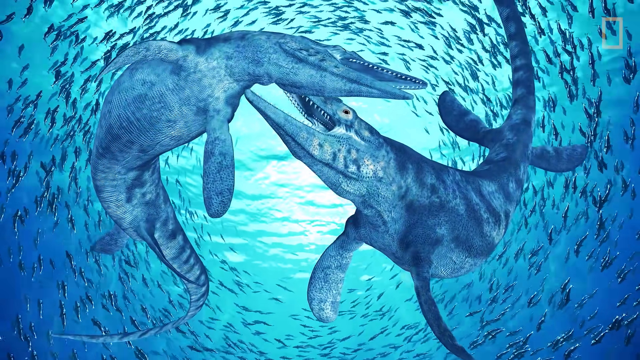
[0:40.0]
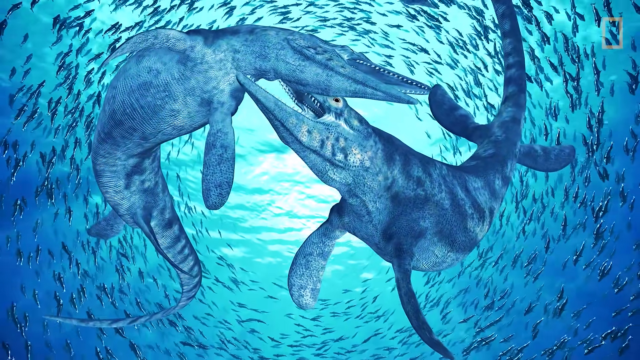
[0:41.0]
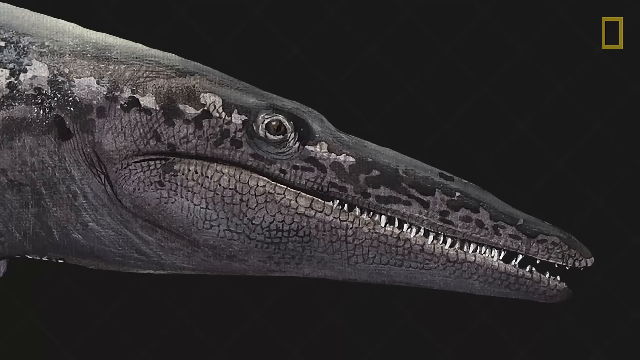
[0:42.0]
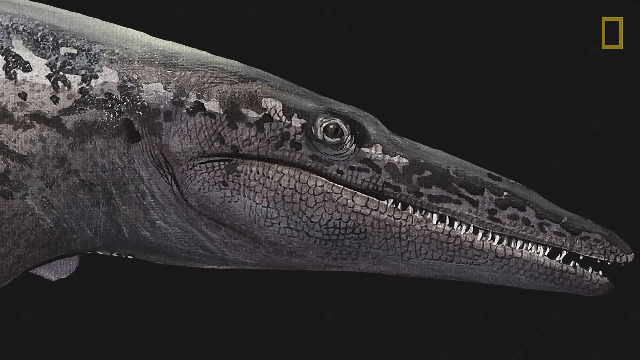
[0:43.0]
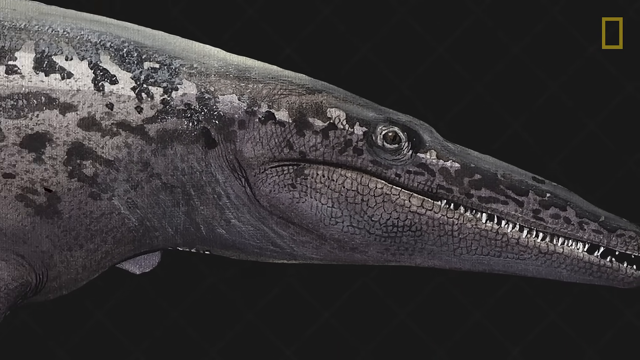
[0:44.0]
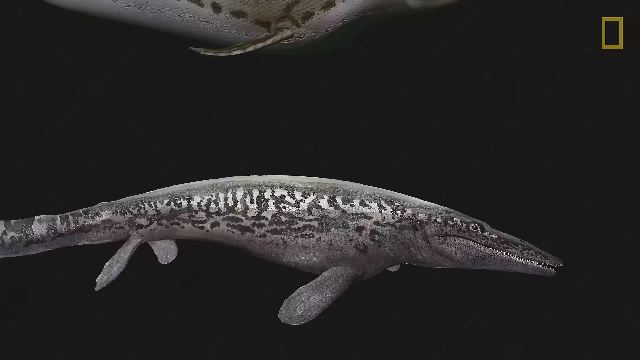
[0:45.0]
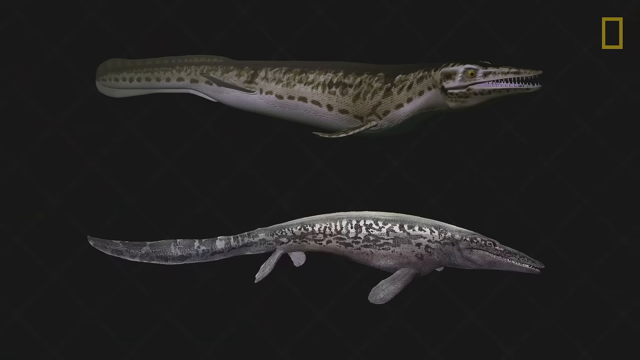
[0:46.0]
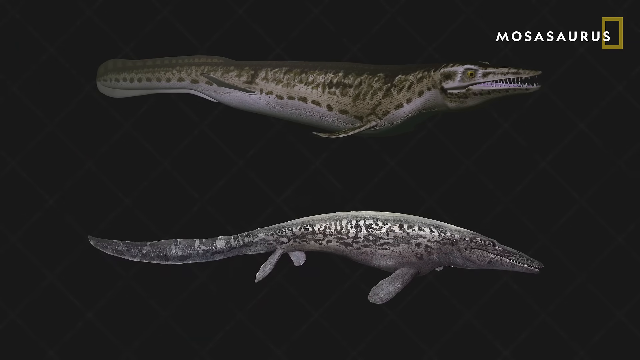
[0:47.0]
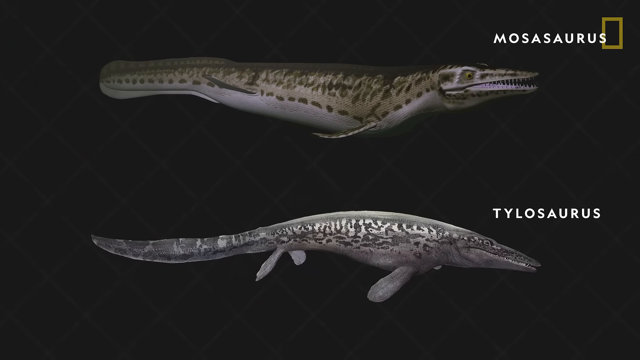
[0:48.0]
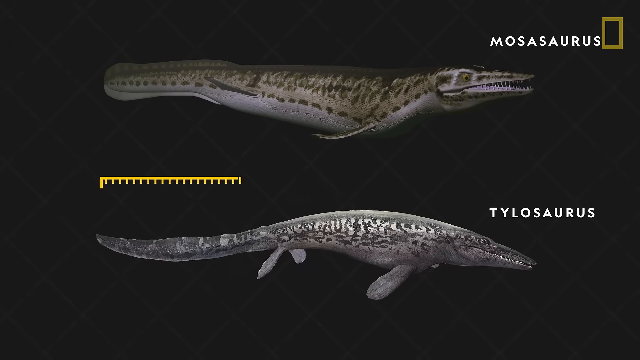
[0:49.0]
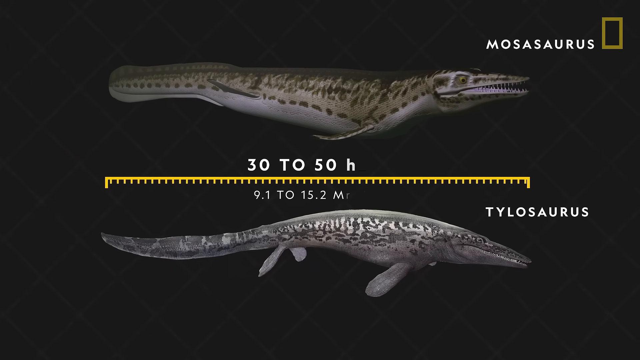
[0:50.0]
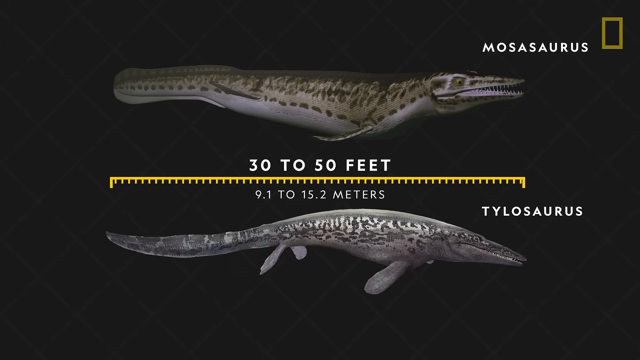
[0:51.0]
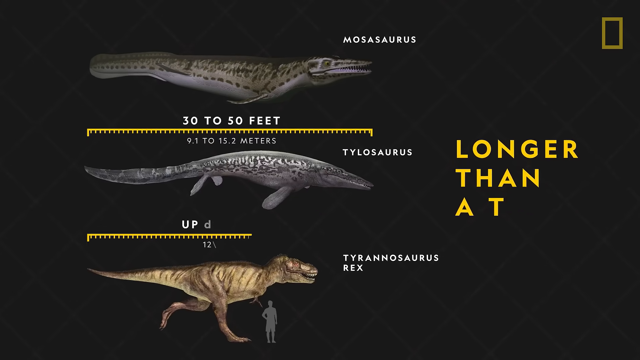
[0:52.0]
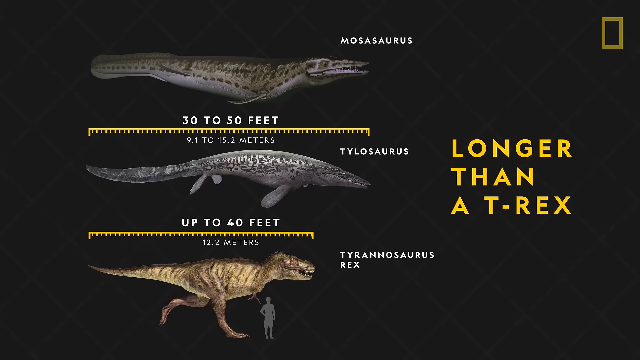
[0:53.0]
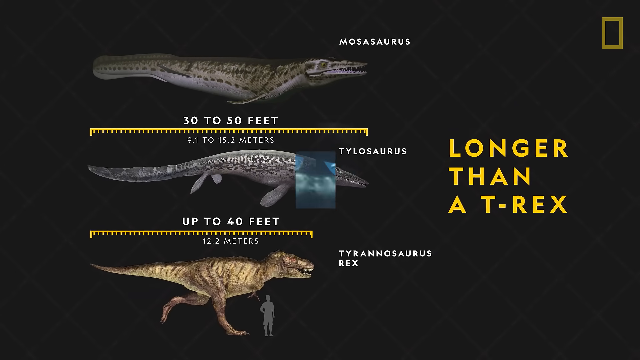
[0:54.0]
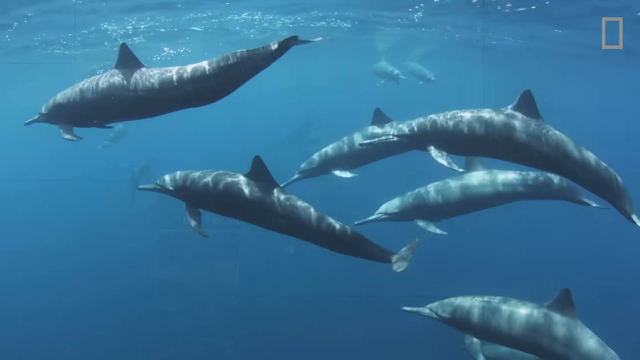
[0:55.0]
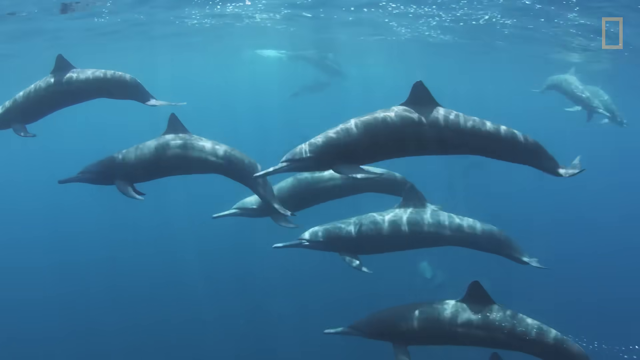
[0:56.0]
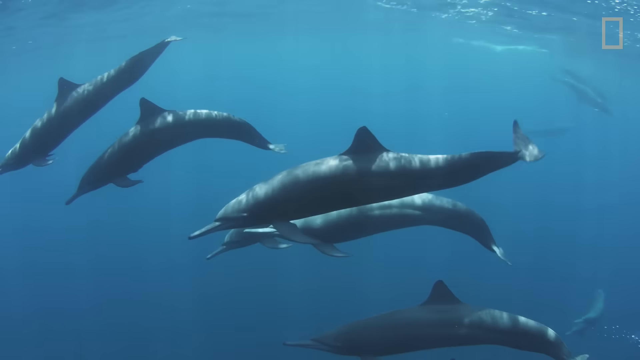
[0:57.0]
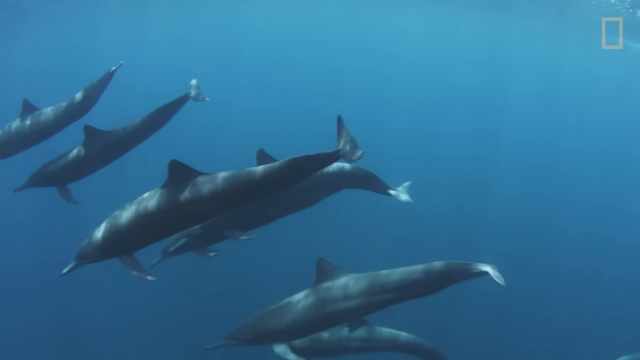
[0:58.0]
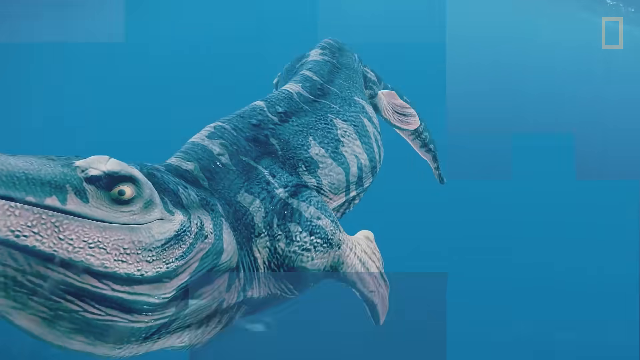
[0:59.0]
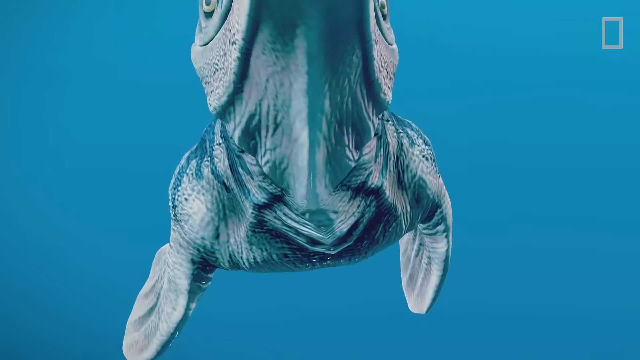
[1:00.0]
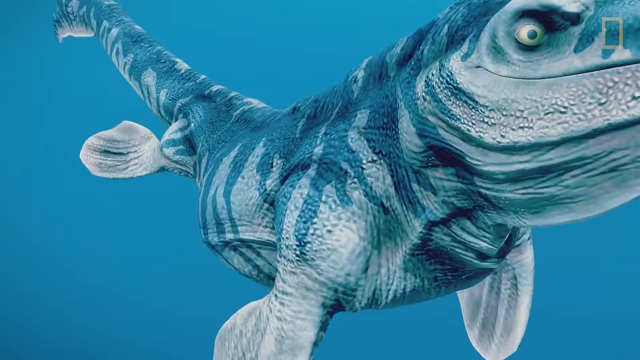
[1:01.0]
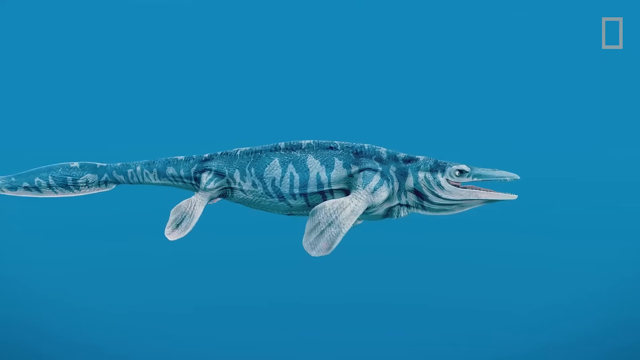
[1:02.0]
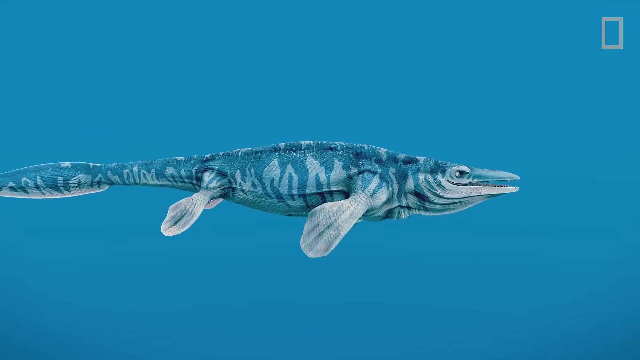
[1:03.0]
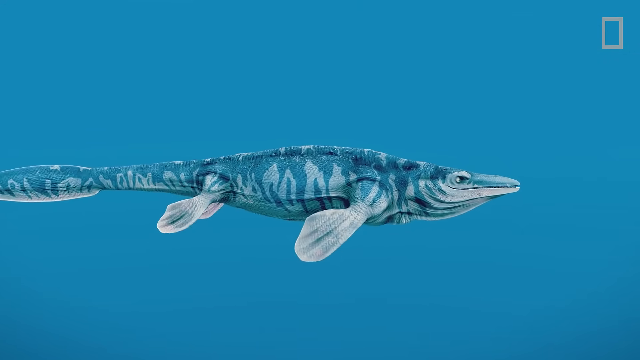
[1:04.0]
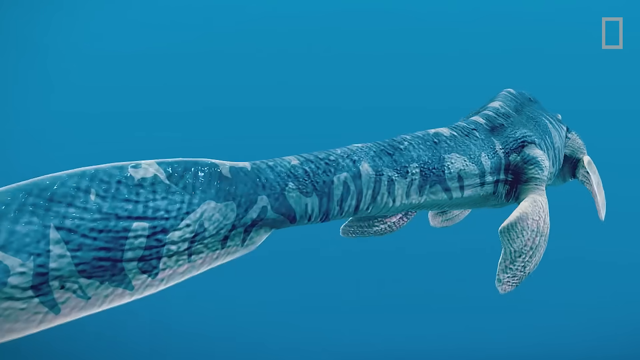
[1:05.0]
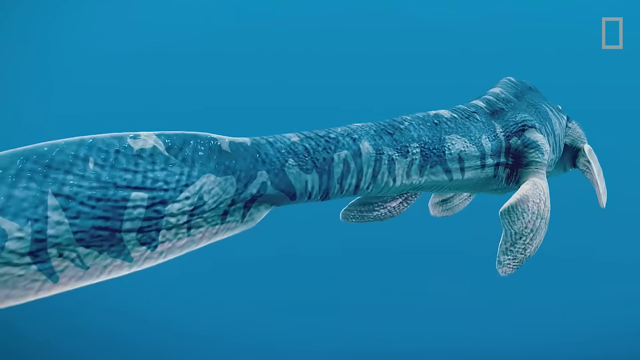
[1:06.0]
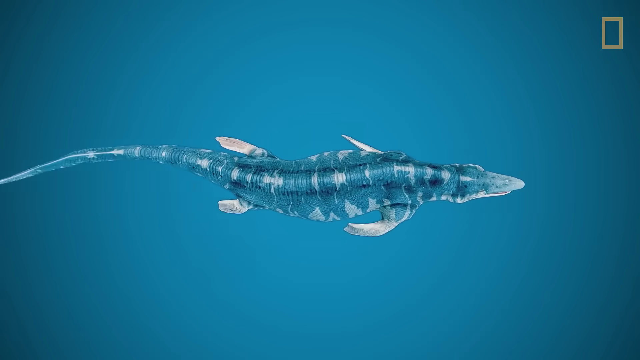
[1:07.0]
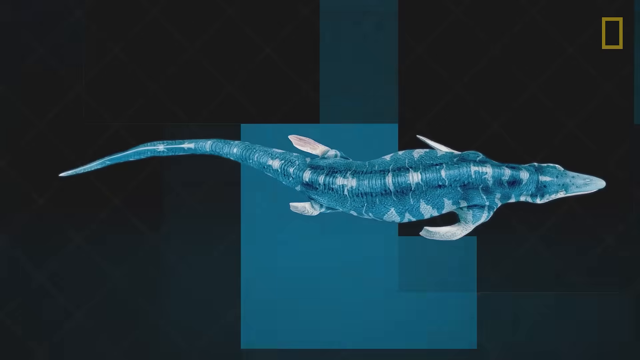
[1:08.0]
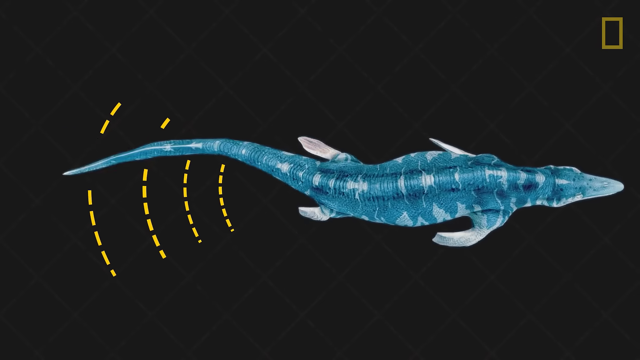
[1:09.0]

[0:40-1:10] A big alligator appears, not a small one, named Mosasaurus and Tyrosaurus, with a size of 3 to 15 feet. It seems to be a fish and seems to be a crocodile, but a larger one. It seems to be swimming in the ocean, and its swimming style is shown through the wave of its tail.